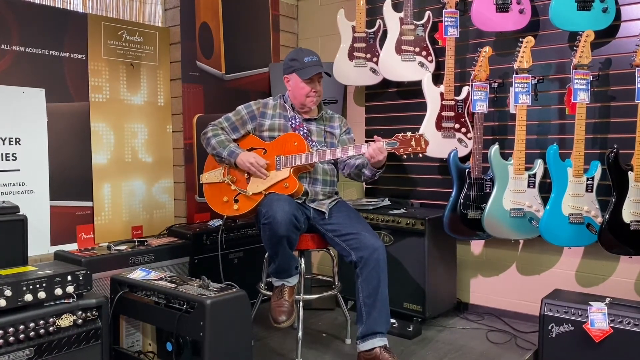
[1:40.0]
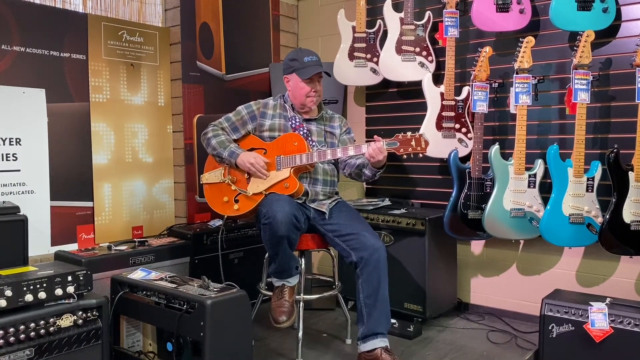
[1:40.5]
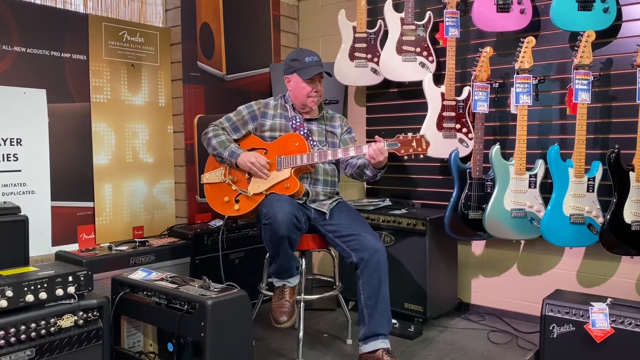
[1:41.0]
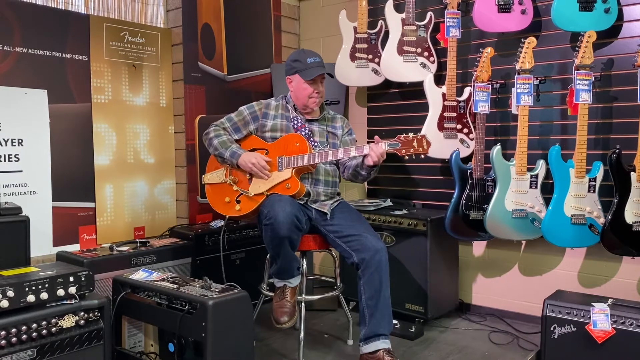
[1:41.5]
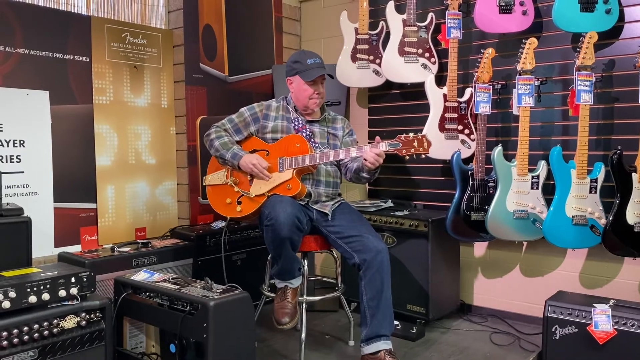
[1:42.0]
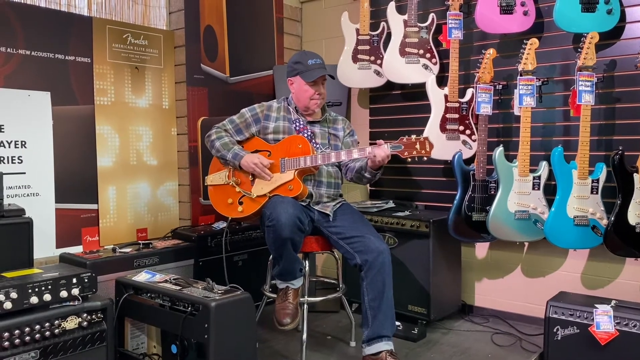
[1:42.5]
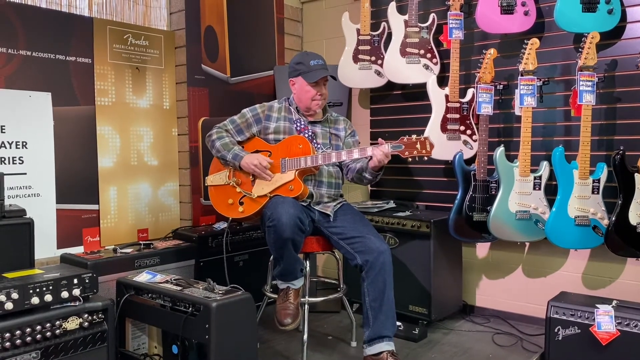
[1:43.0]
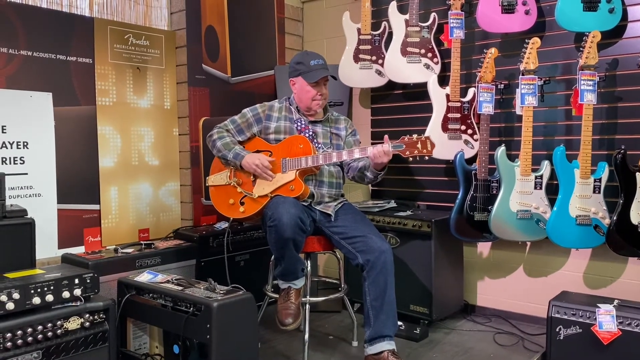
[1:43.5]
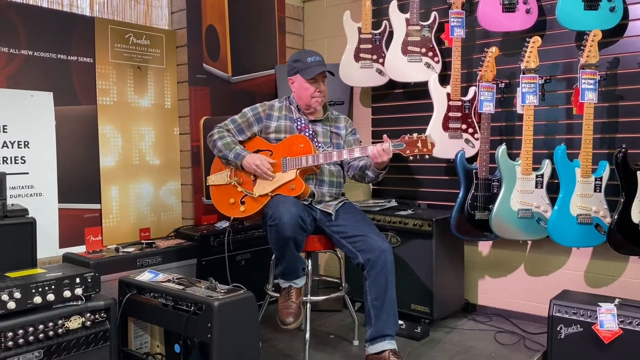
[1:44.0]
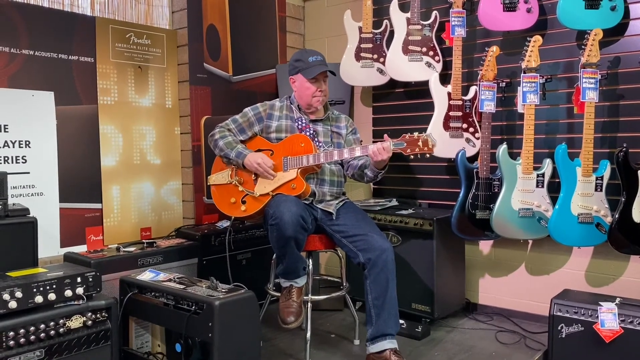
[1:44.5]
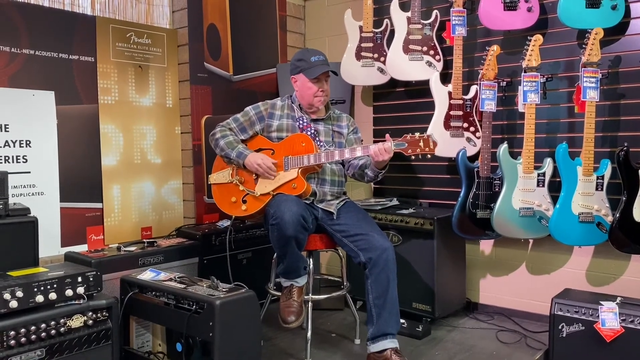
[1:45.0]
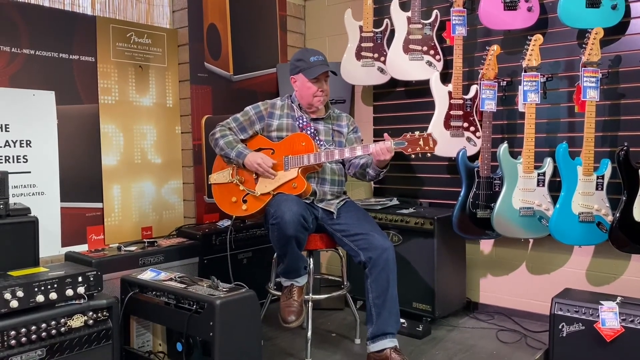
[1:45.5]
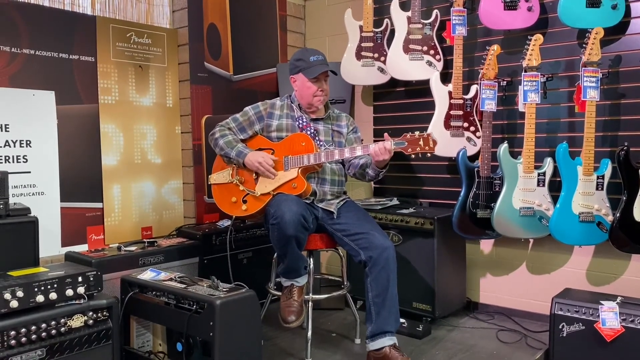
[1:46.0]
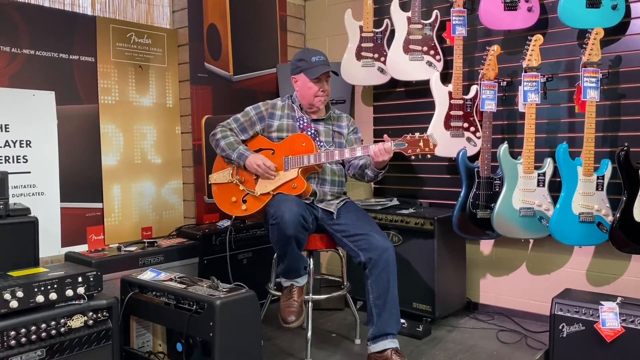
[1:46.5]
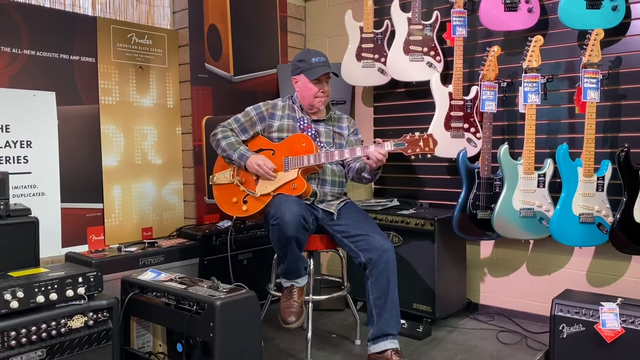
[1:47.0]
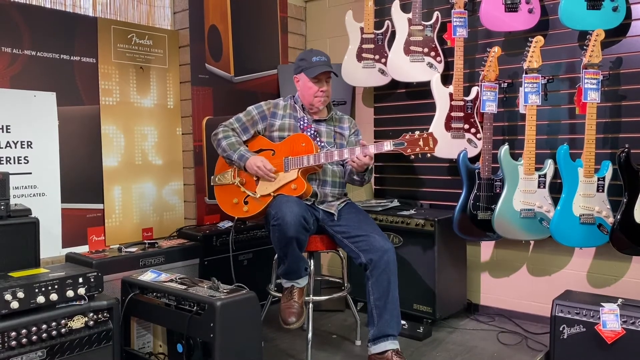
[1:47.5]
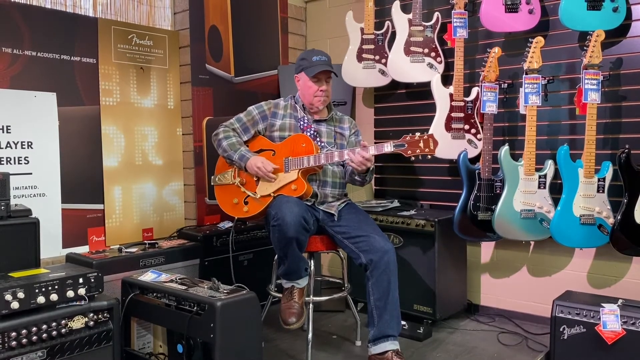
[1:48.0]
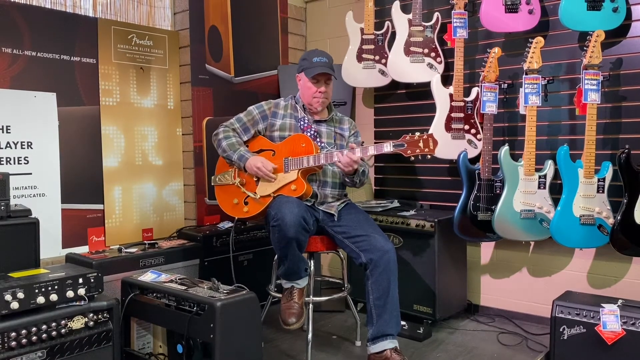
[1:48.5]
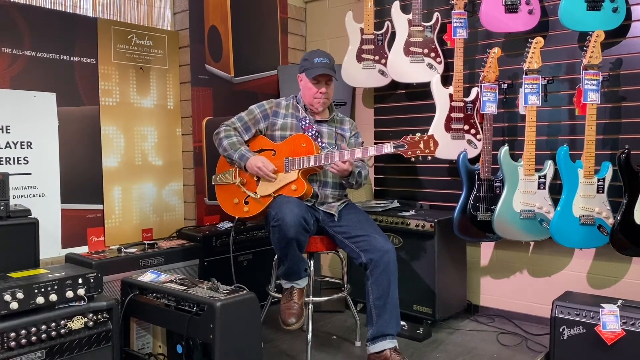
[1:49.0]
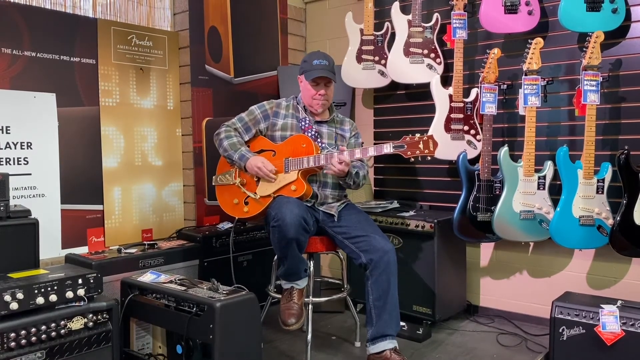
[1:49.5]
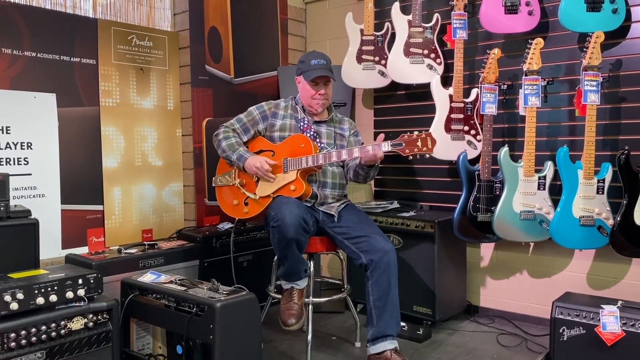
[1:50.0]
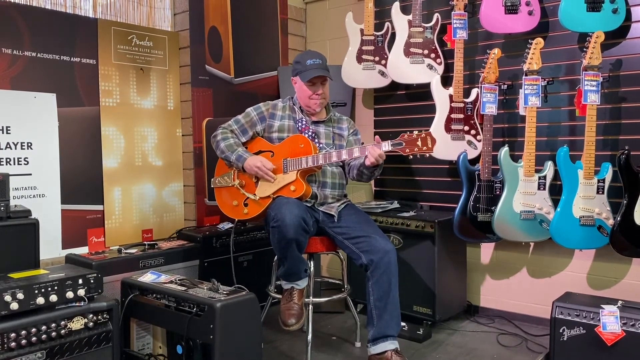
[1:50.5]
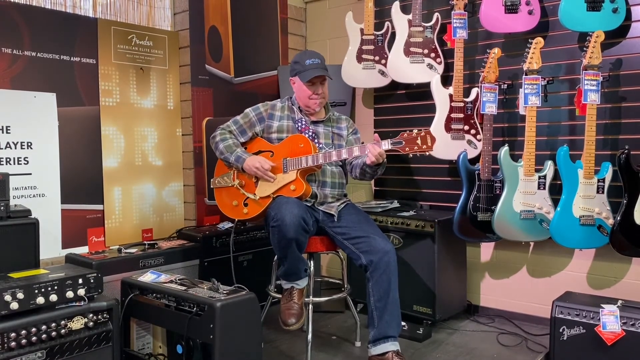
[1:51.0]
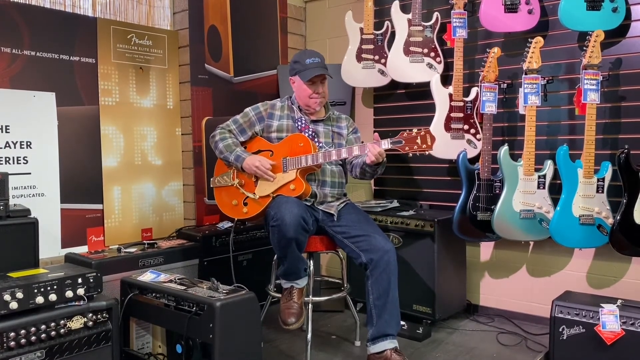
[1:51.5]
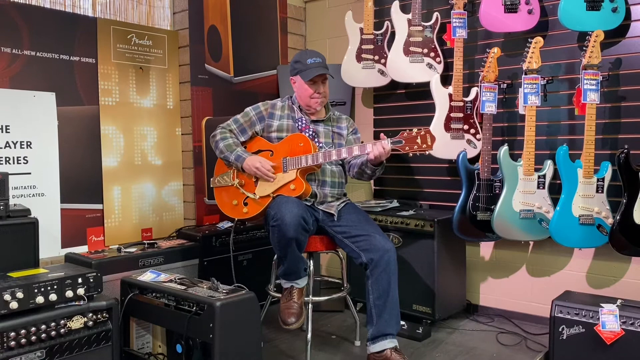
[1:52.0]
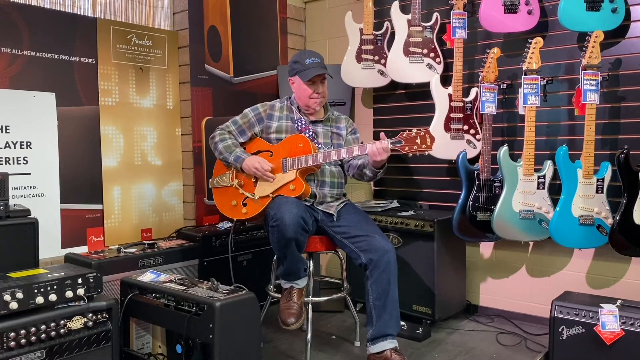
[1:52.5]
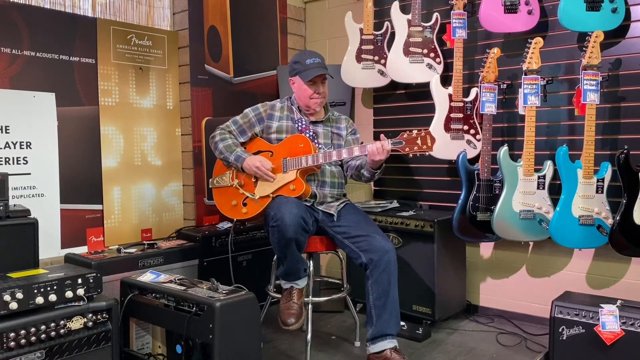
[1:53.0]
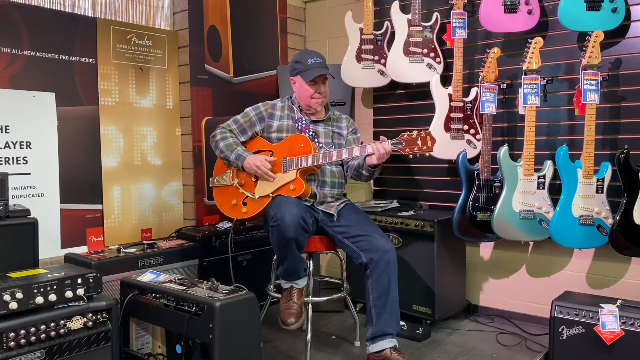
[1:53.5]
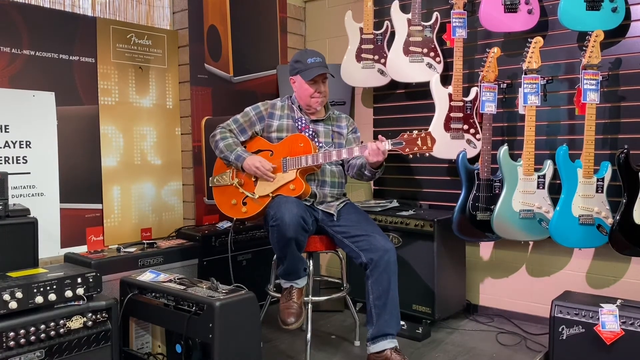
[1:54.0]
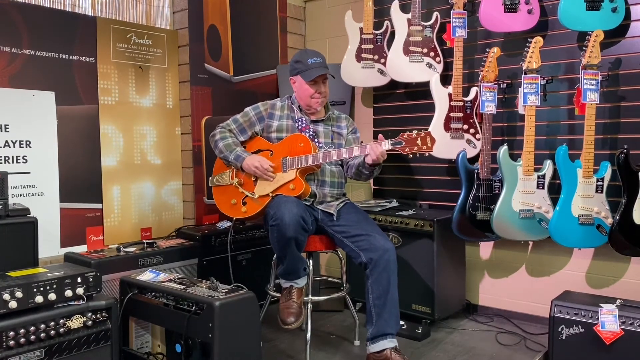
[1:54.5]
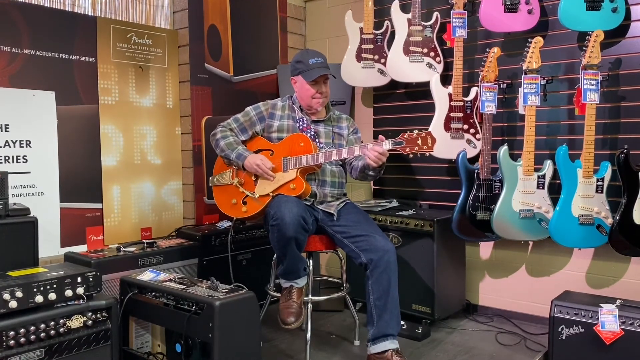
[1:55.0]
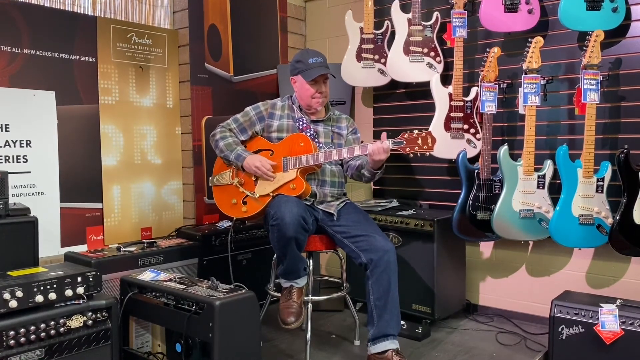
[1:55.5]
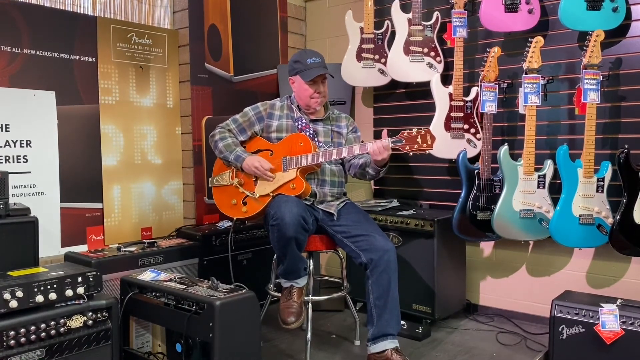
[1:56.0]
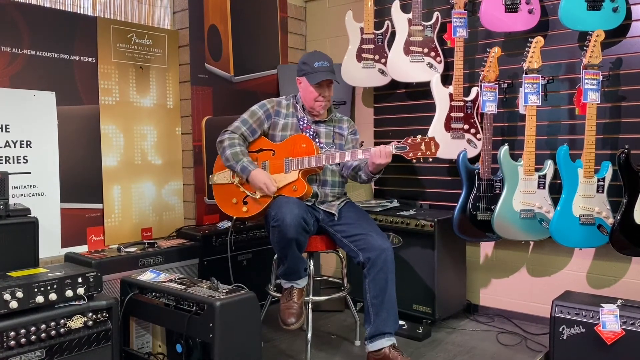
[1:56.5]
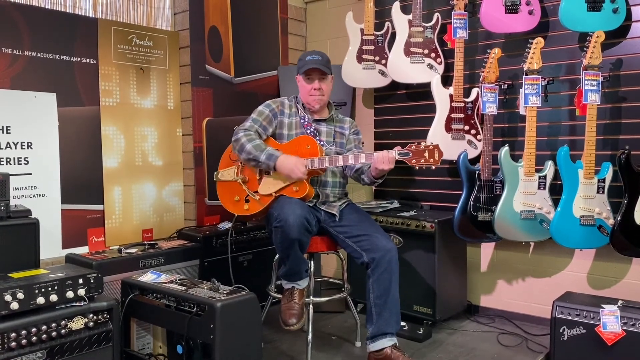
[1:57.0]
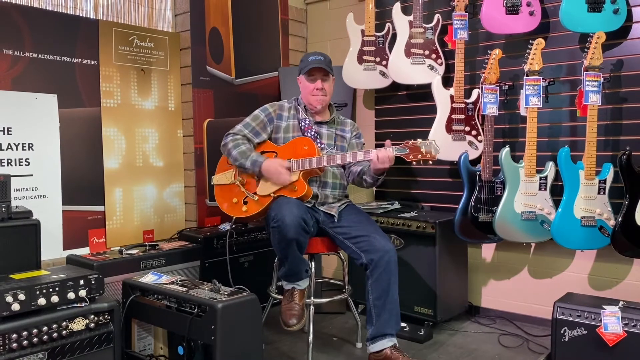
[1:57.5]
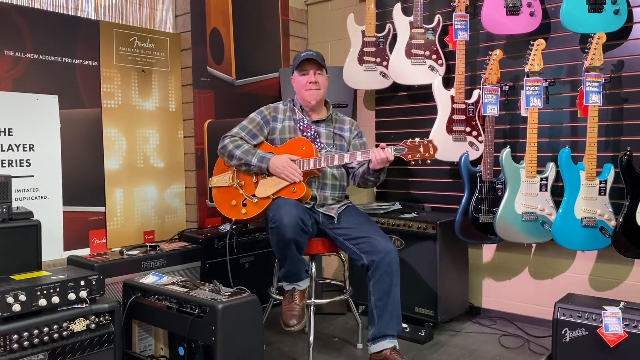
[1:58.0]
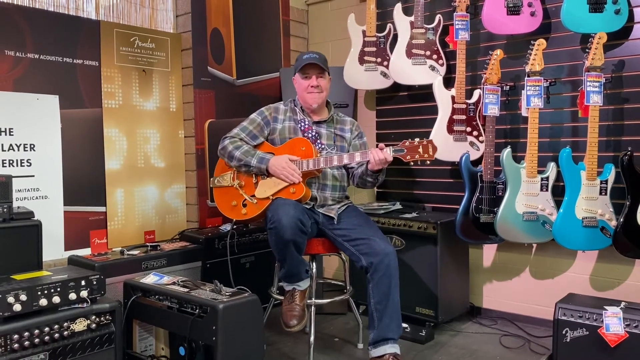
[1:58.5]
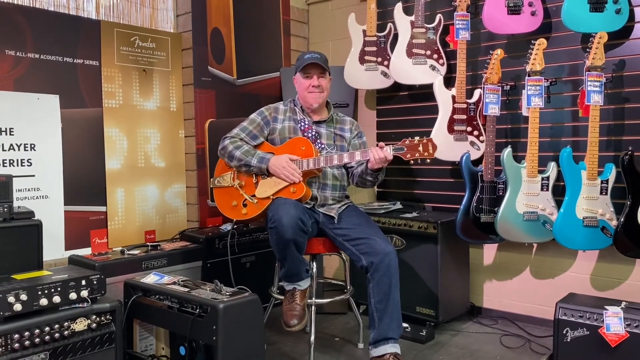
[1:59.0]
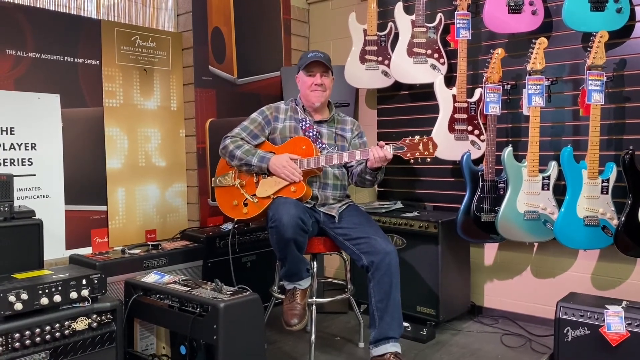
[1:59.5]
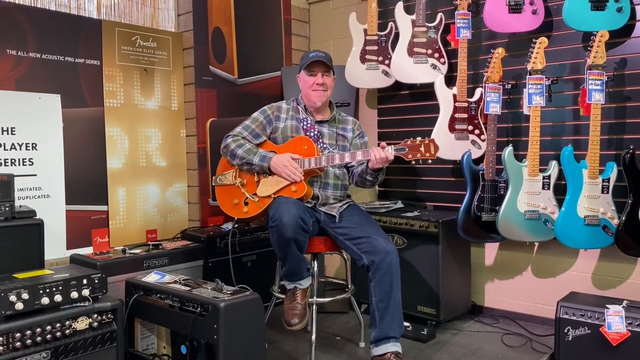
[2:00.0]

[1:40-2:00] The man continues playing the guitar. He wears blue jeans and has gray hair, probably in his 50s or maybe early 60s. At the end he plays a few final strums and looks at the viewer with a smile. The guitars on the right are all hanging with little blue price tags attached. There is a pink guitar at the top left, a turquoise one at the top right, a light blue one at the bottom right and a dark blue one at the bottom left, while the one at the bottom middle has a gradient of gray and turquoise. At the top left are three similarly colored white guitars.